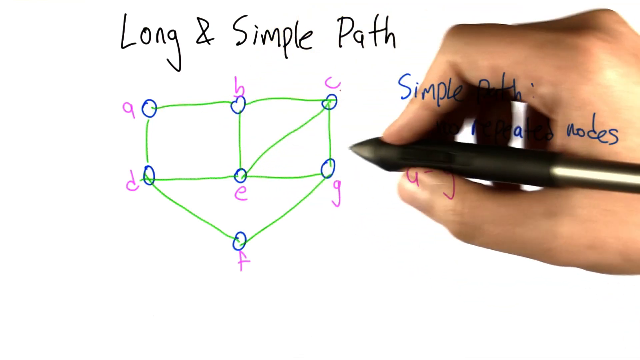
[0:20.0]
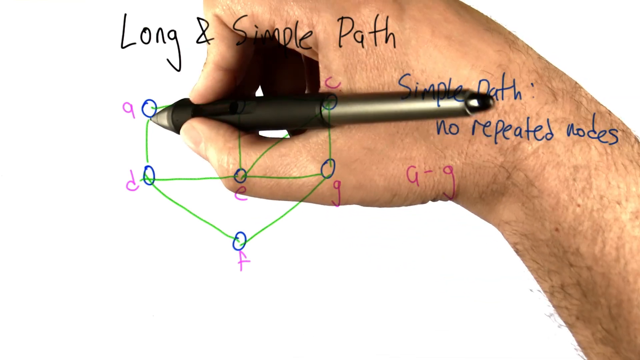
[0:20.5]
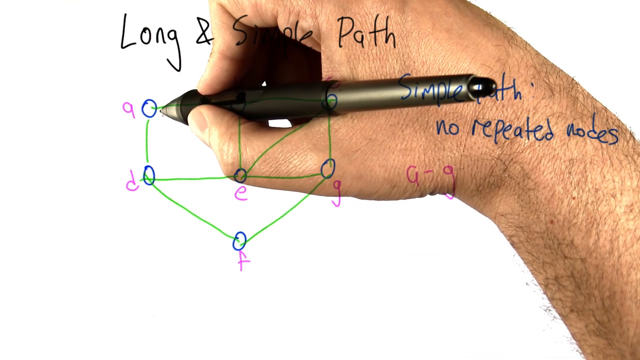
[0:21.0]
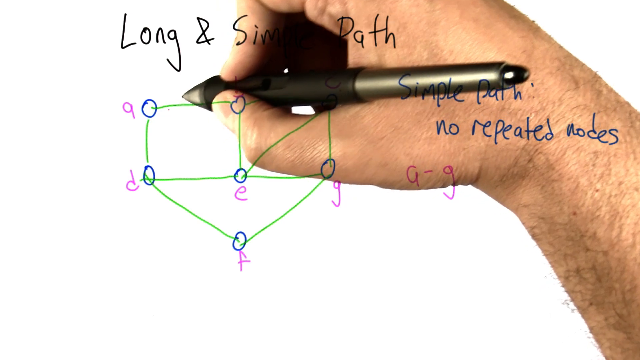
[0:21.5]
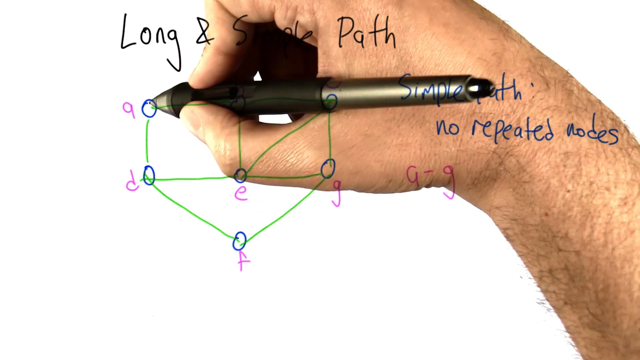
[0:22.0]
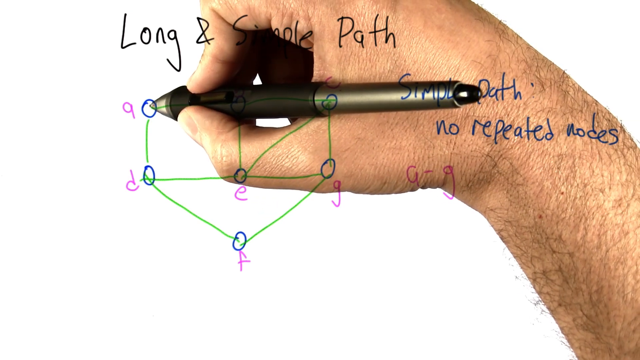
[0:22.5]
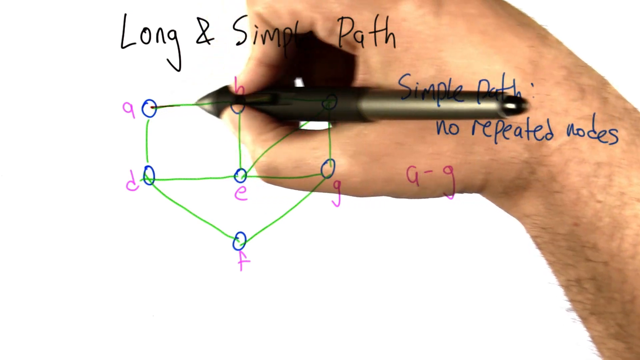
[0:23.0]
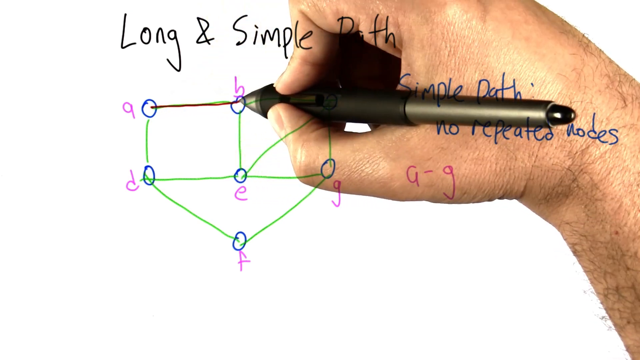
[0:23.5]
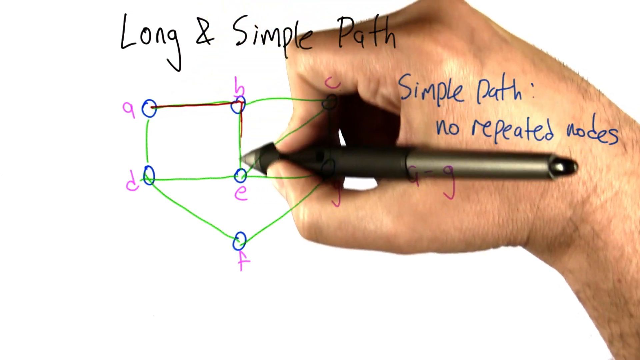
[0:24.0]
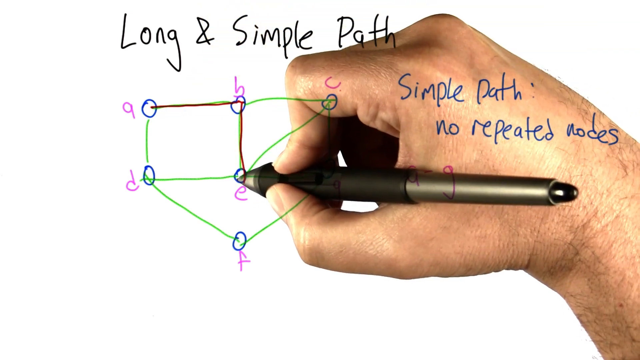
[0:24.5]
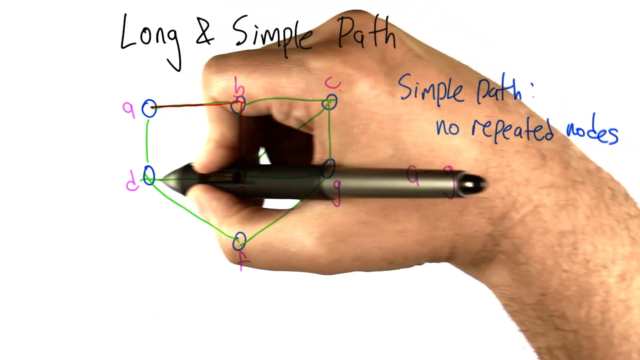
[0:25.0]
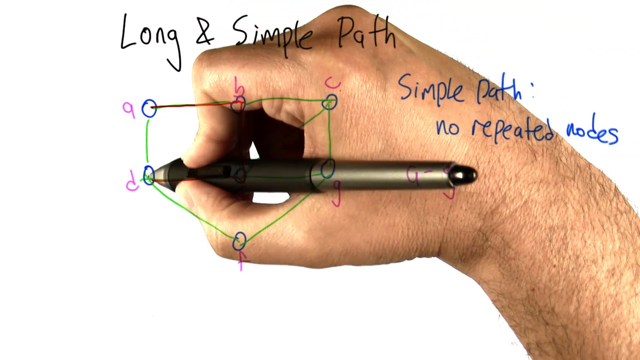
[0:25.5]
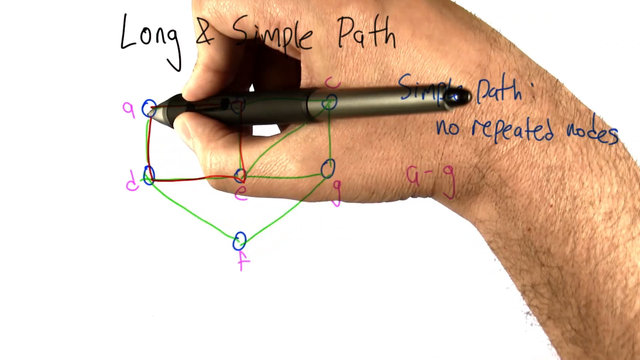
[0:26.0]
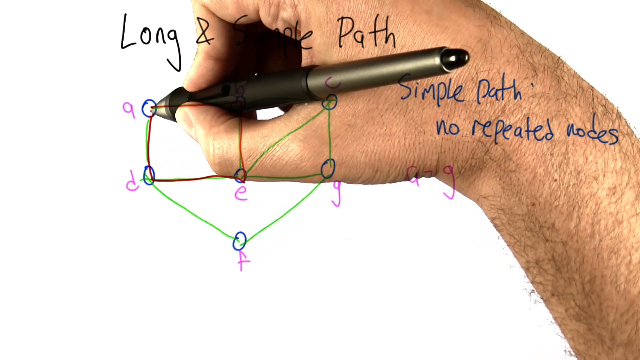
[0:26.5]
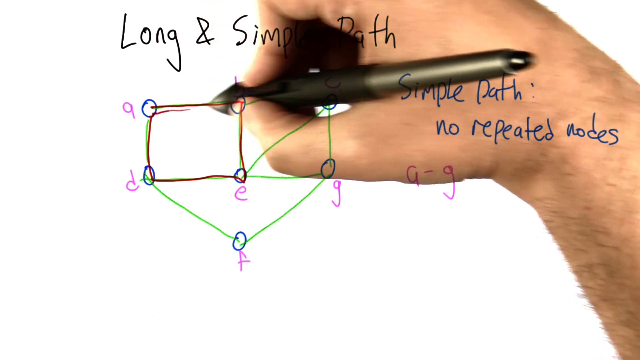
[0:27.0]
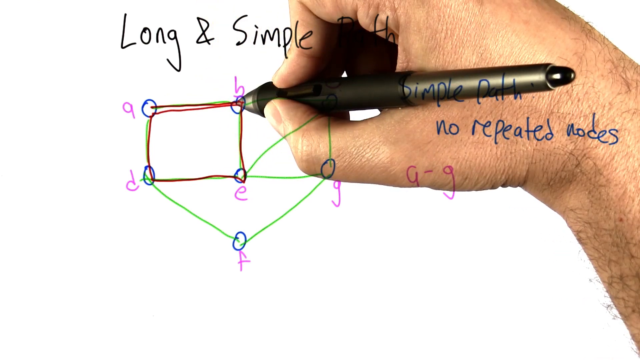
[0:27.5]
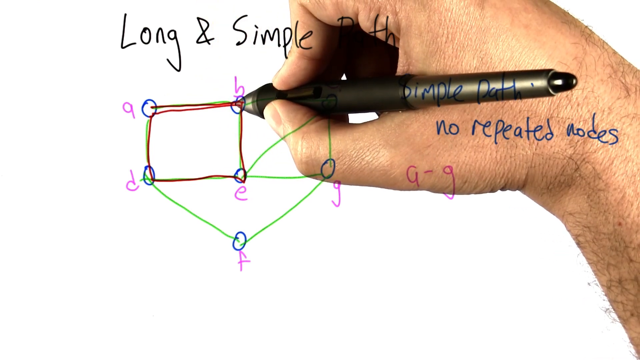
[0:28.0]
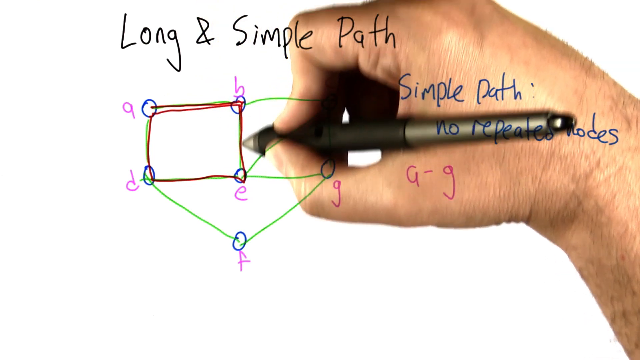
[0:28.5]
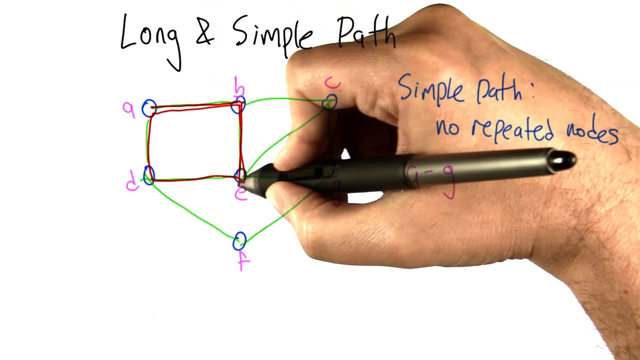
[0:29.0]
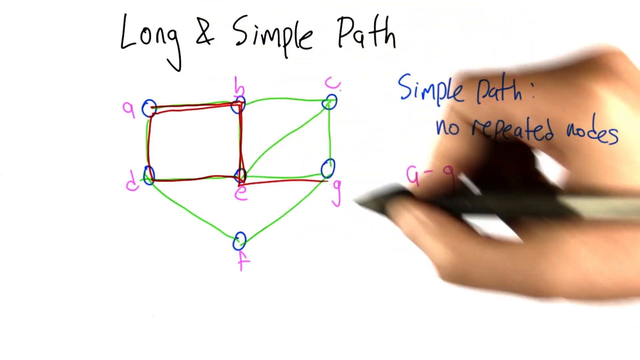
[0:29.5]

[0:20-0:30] A human hand holds a pen over a diagram labeled with the letters A, B, C, D, E, G, F and G. The hand draws on the diagram, tracing a simple path with no repeated nodes, and moves all over the paper. On the other side of the sheet is written "simple path, no repeated nodes." No clothes are visible and nothing else happens besides the drawing.